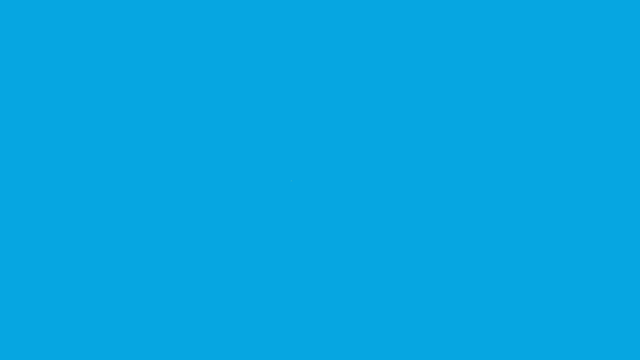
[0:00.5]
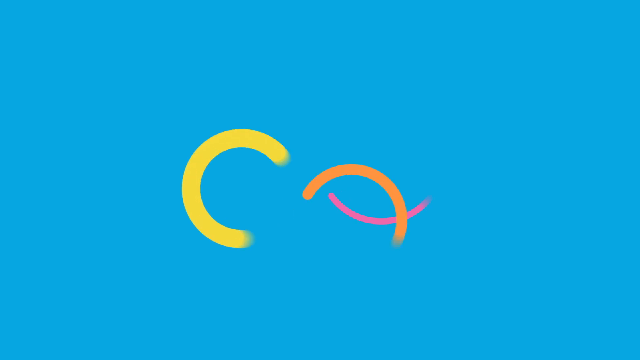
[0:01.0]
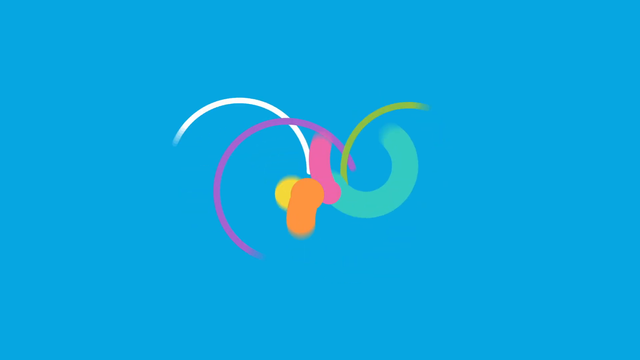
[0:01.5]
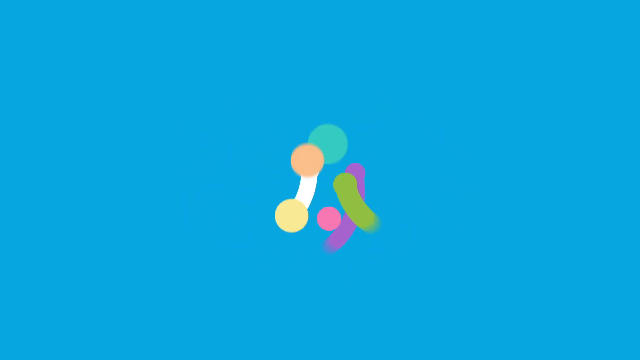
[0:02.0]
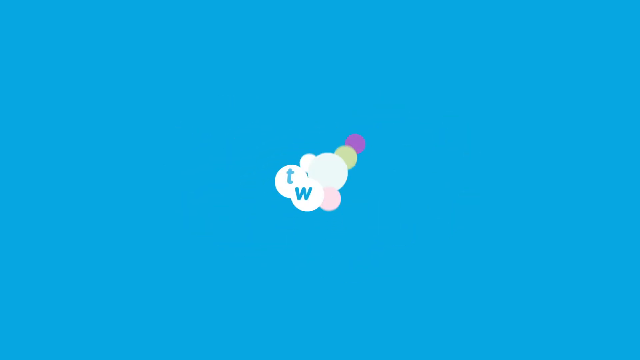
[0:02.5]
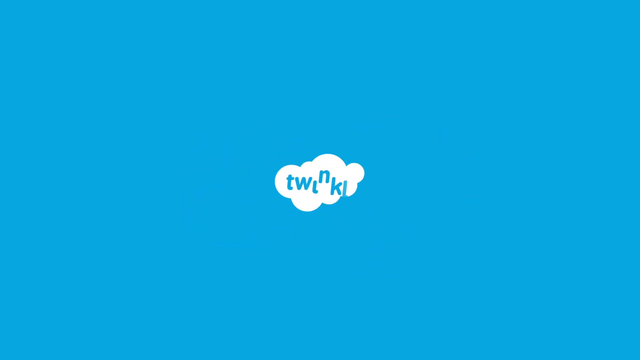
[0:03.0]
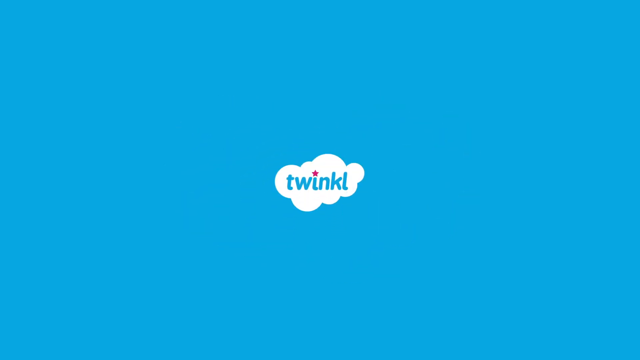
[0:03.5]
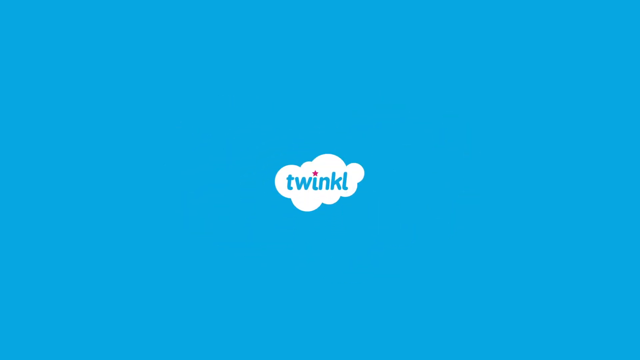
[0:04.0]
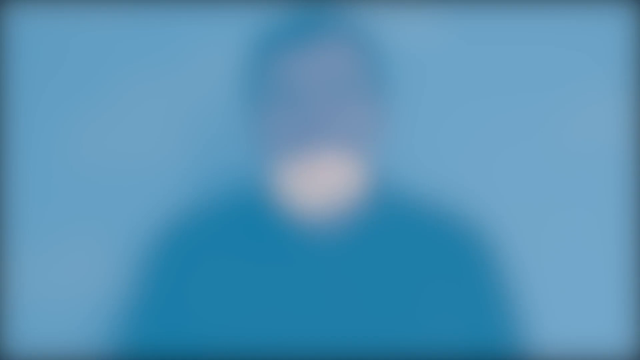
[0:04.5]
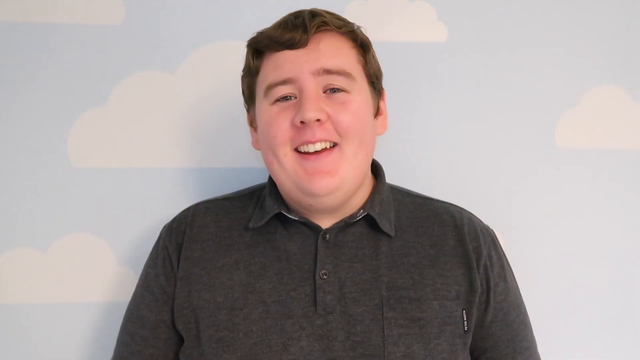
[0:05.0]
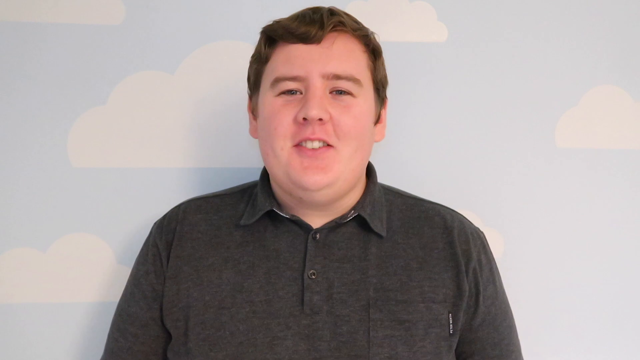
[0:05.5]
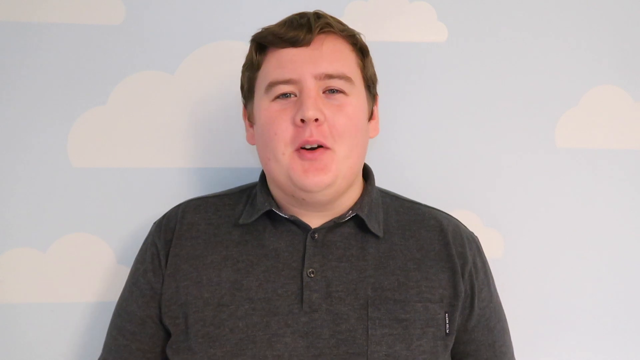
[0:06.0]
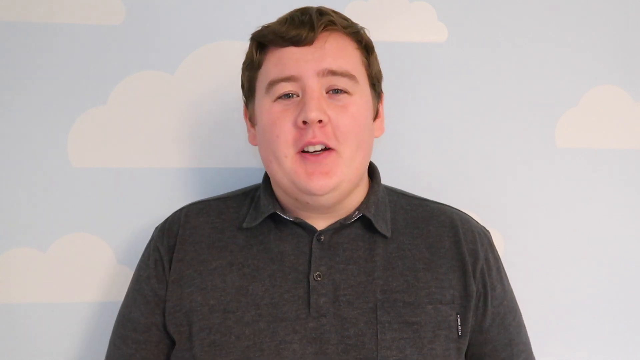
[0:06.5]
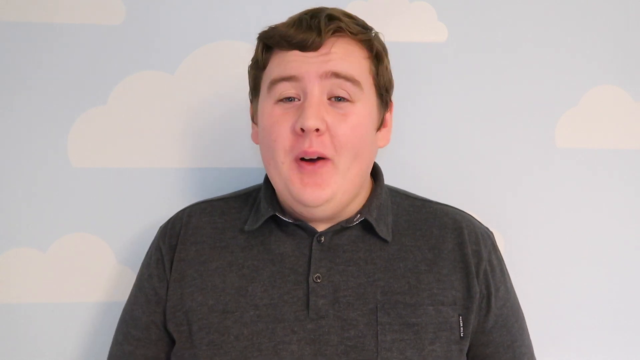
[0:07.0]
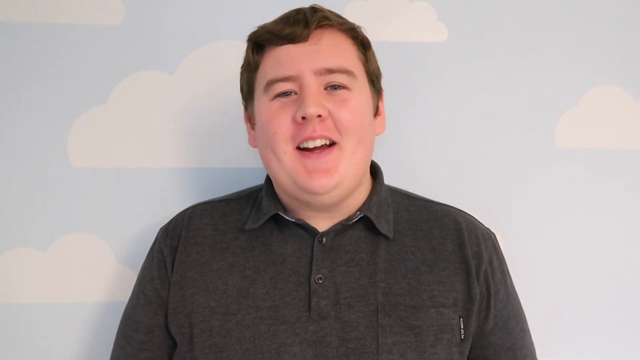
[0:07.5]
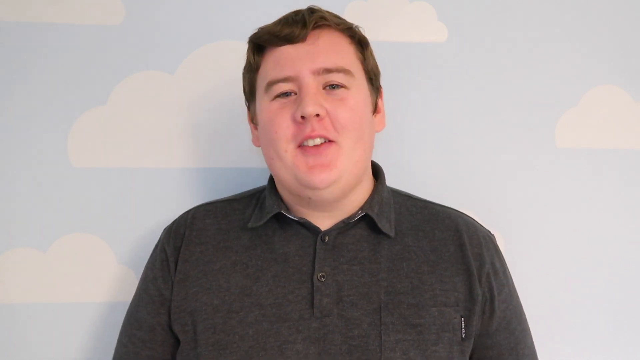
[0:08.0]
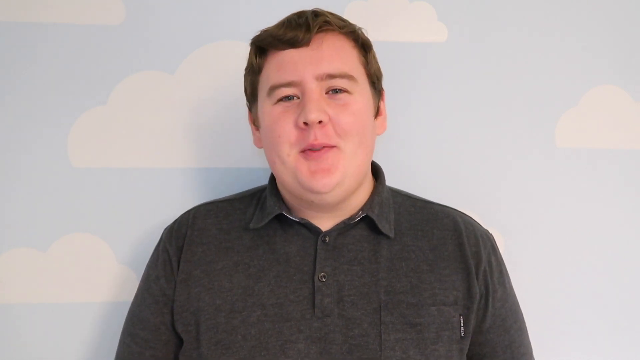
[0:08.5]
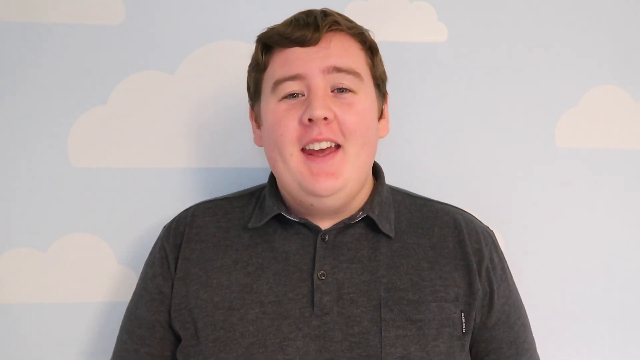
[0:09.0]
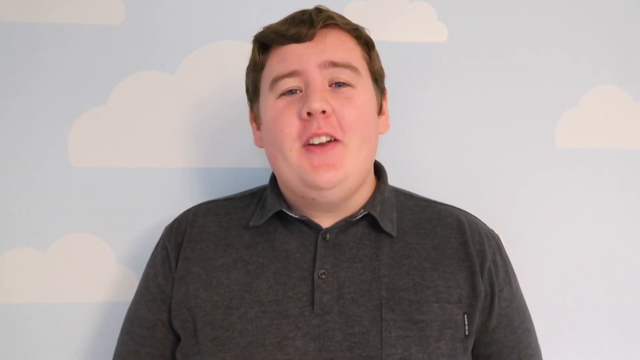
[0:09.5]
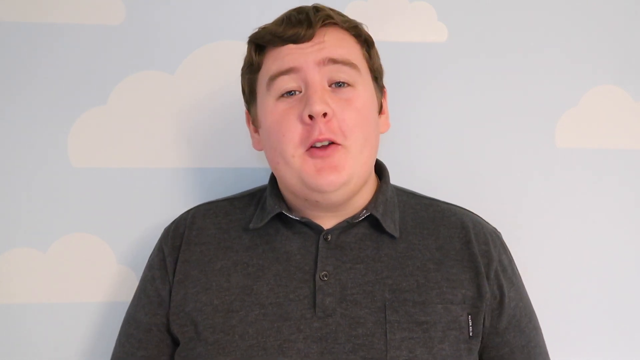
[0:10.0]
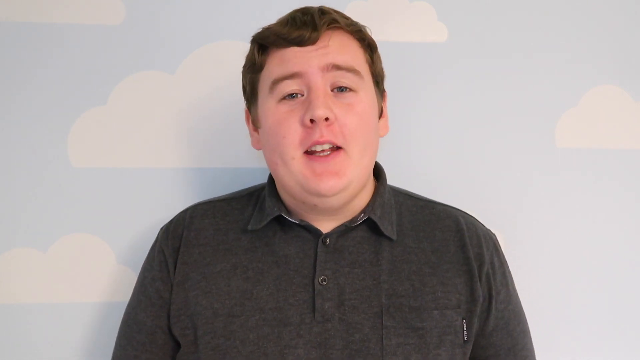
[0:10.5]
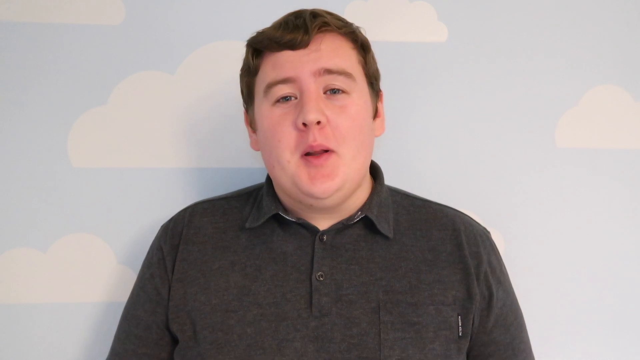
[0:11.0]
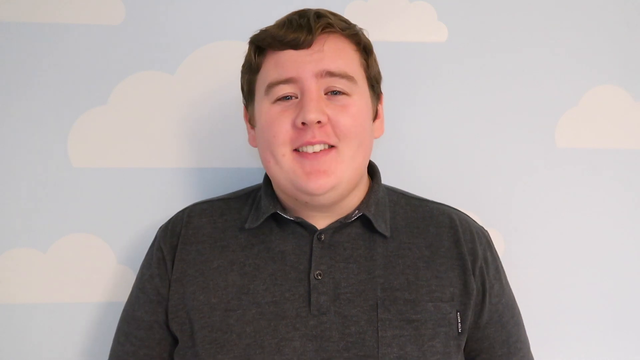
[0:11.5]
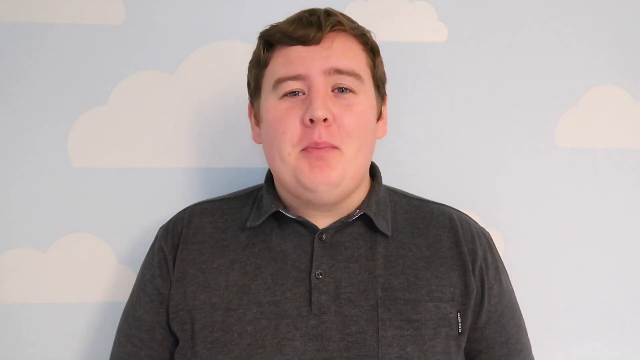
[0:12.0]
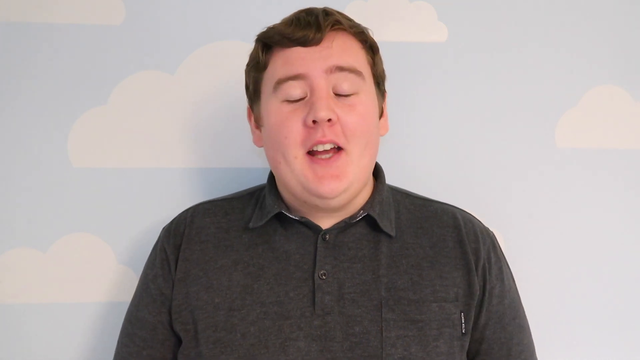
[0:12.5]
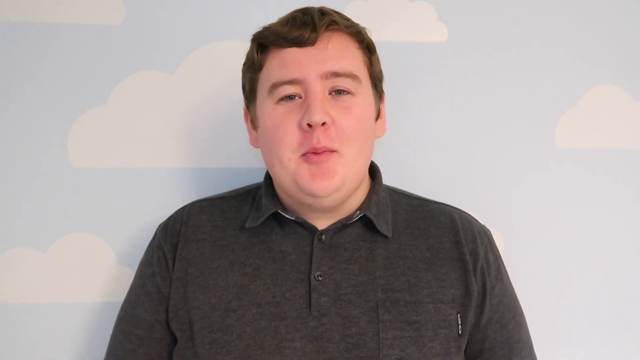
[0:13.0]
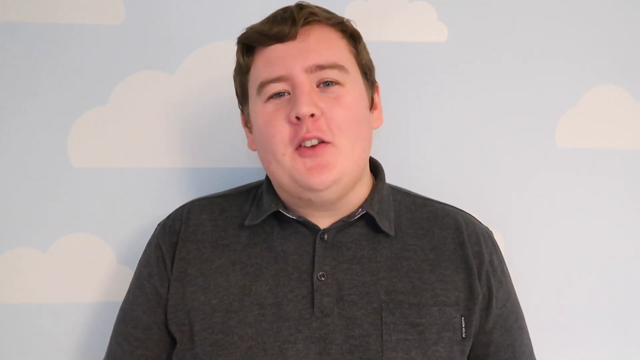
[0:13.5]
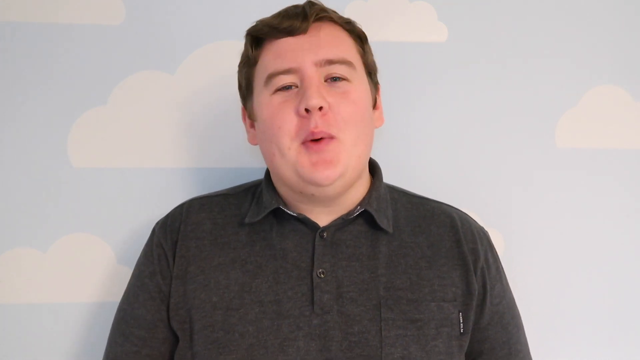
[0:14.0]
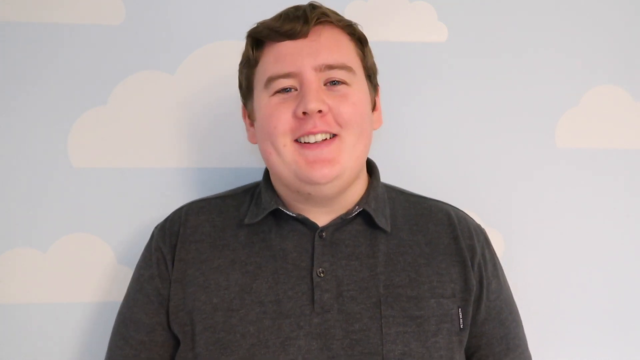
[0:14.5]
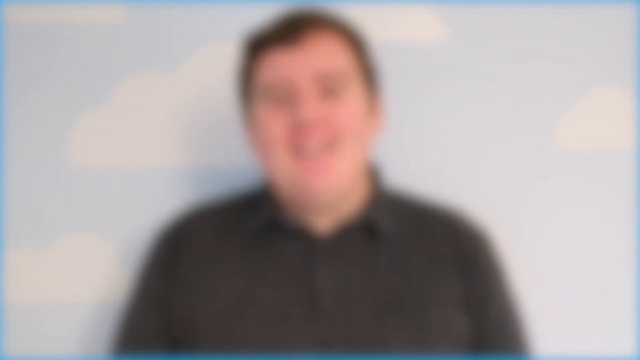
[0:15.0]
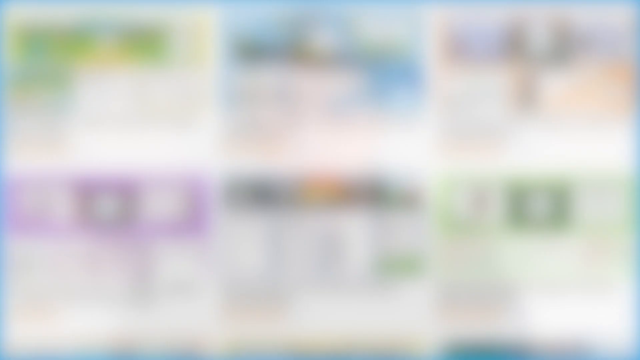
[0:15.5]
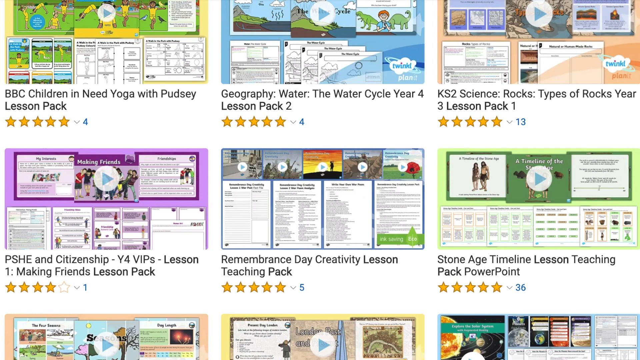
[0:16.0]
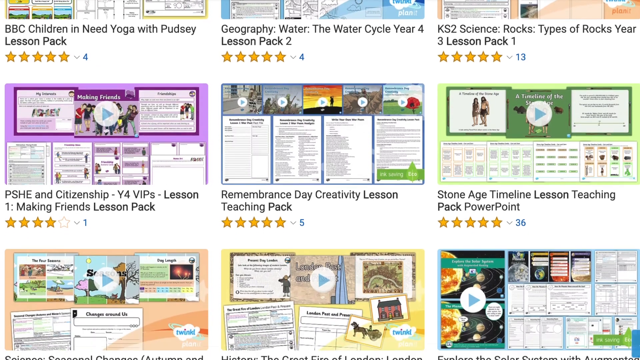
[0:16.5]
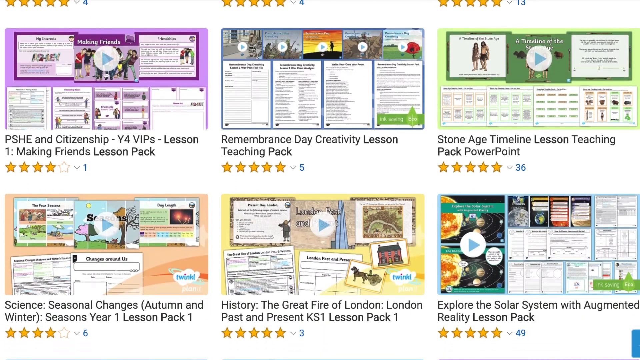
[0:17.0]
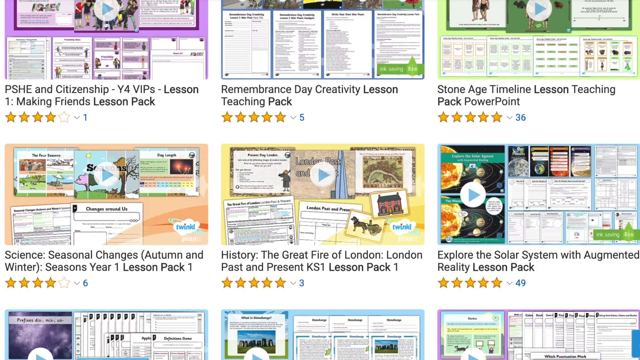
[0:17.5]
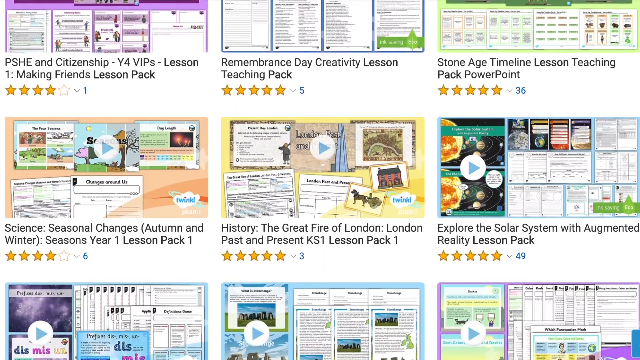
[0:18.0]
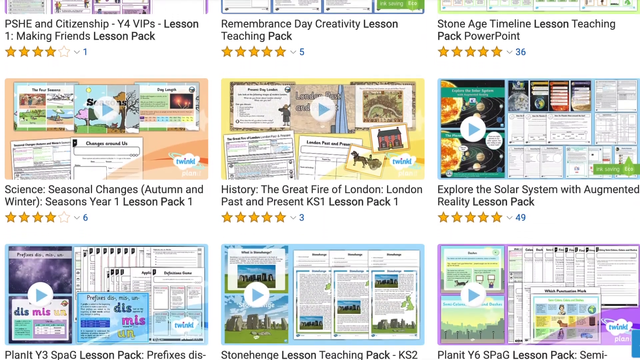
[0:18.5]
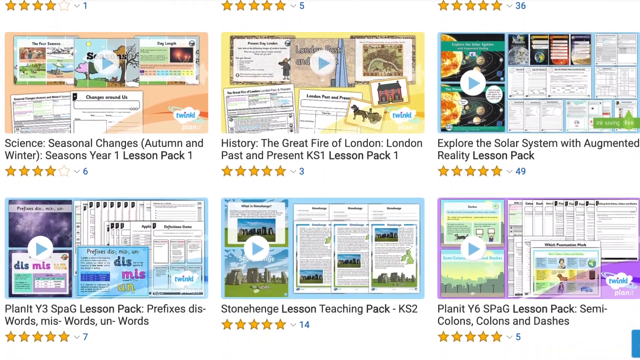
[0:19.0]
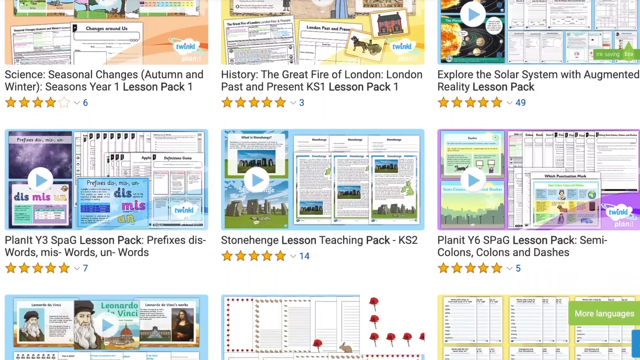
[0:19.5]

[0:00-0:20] A blue background appears with the word "Twinkle" shown in different colours. A white man with brown hair, wearing a black coat, is alone on screen; his teeth are very nice. He stands in front of a border and a blue background with clouds in it. The view then changes to another page showing what Twinkle offers, with different options and infographics, including geography, the water cycle for four-year-old learners, five stars, science, and types of rocks.